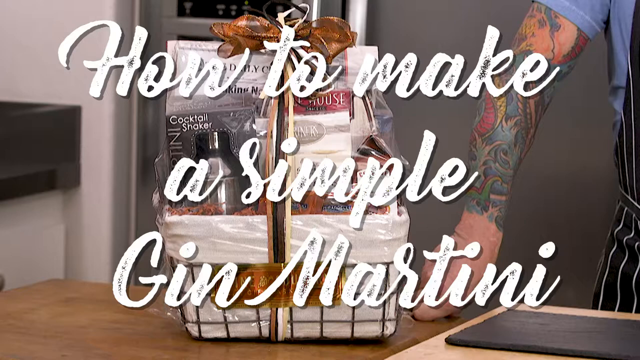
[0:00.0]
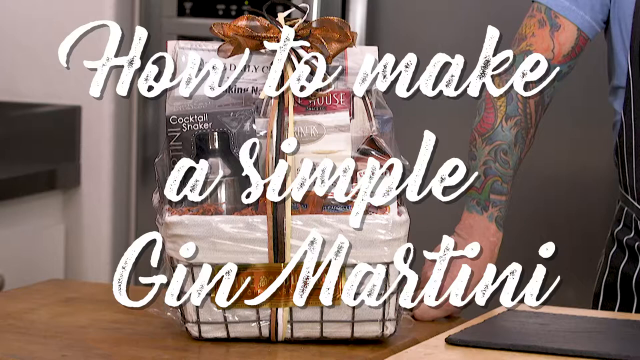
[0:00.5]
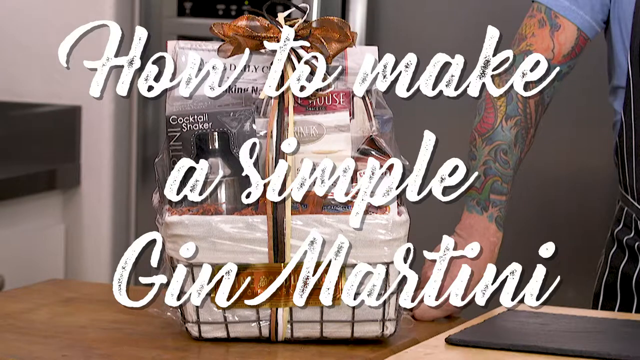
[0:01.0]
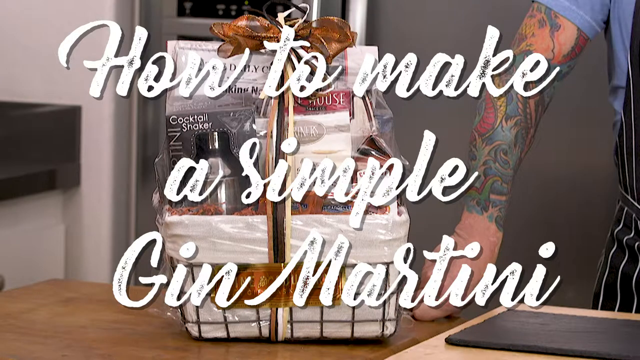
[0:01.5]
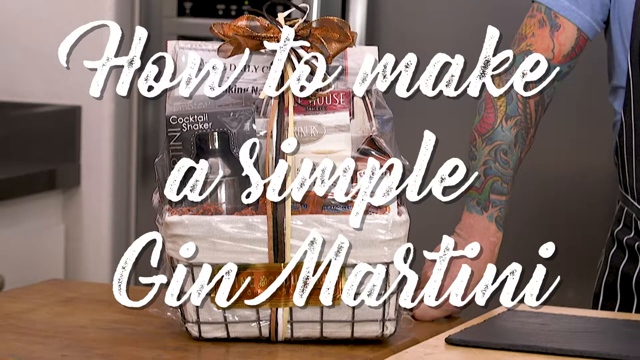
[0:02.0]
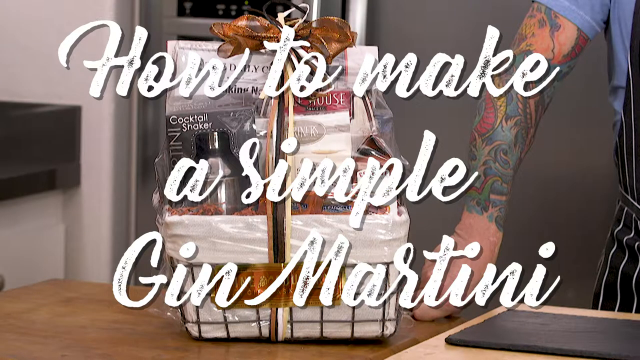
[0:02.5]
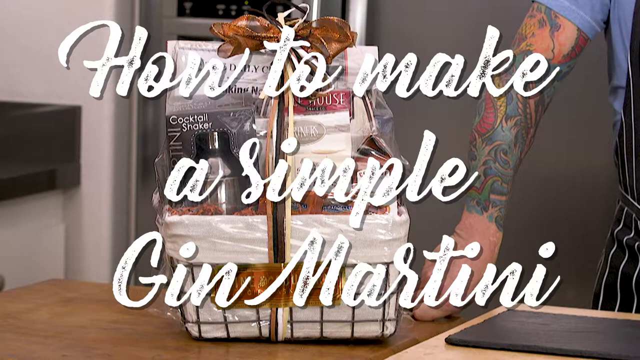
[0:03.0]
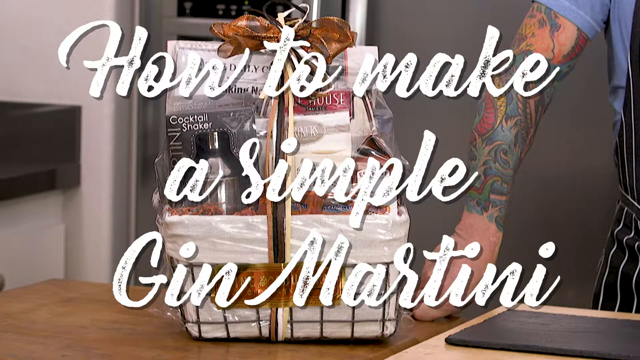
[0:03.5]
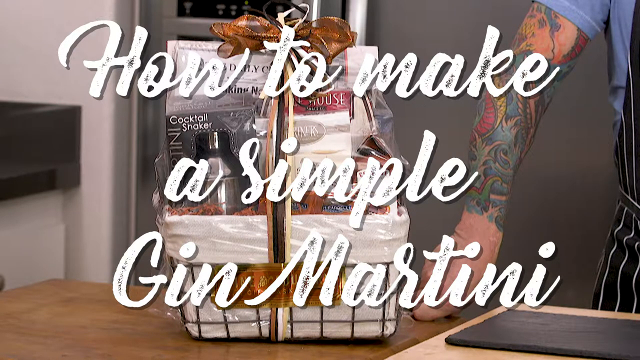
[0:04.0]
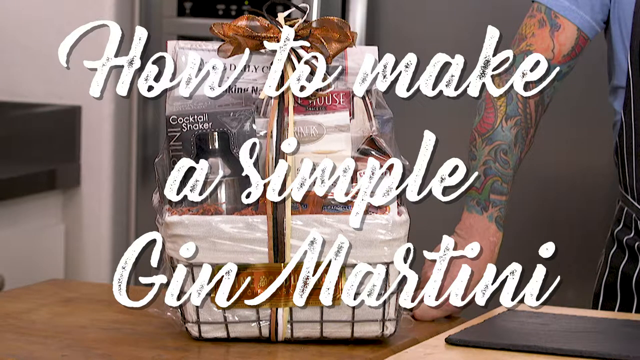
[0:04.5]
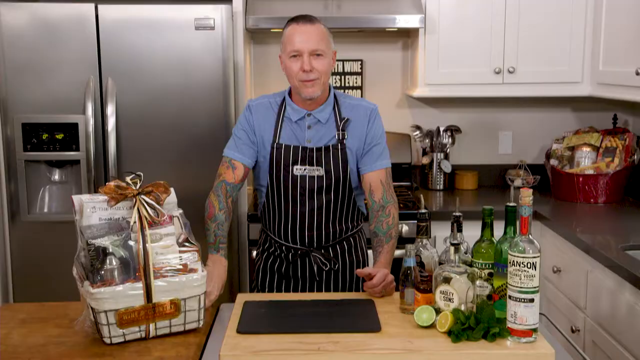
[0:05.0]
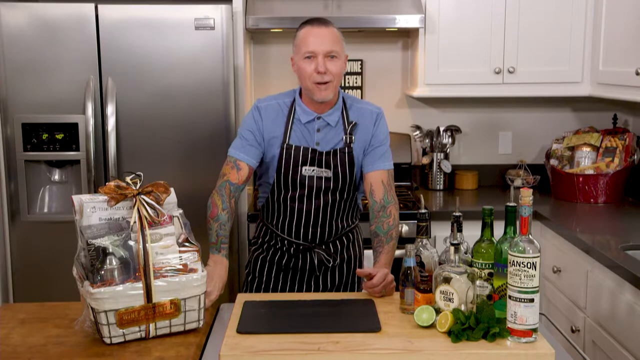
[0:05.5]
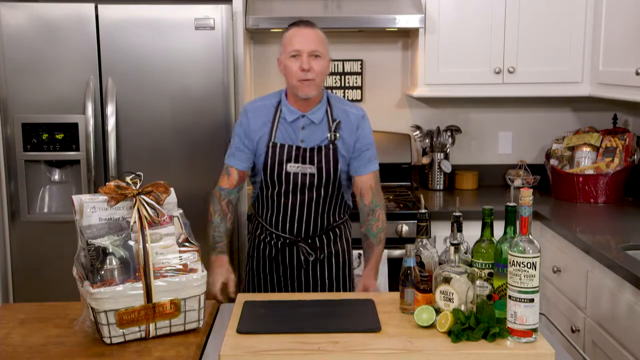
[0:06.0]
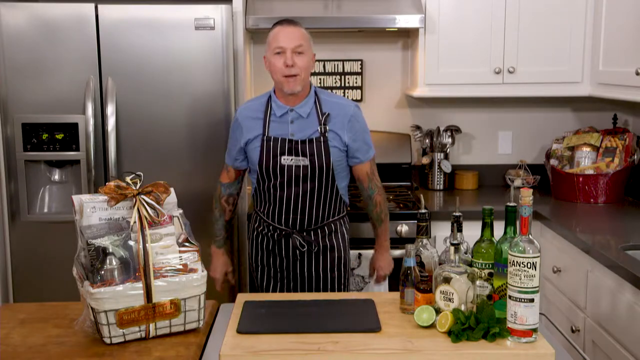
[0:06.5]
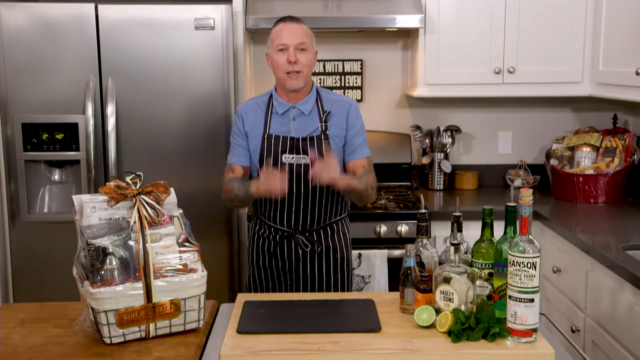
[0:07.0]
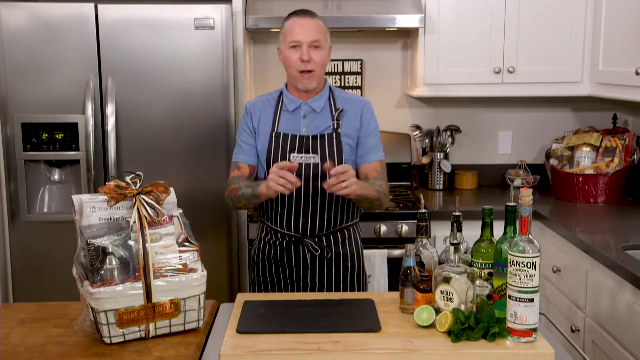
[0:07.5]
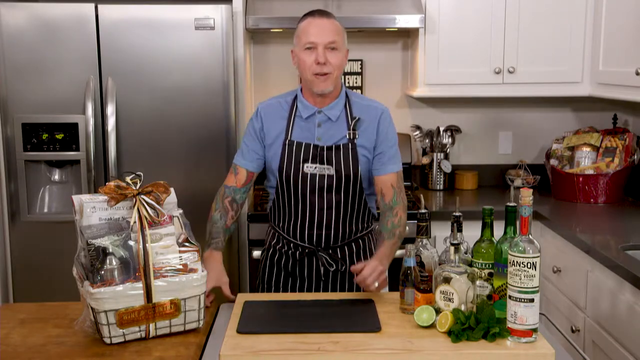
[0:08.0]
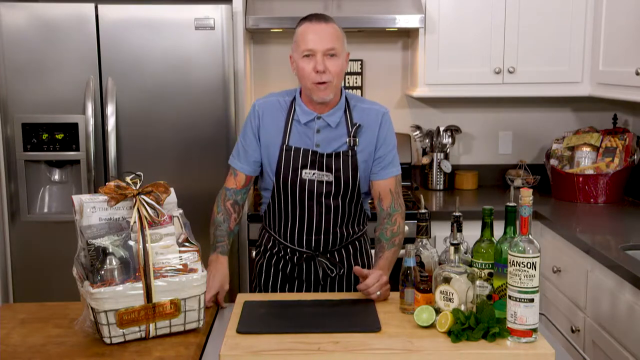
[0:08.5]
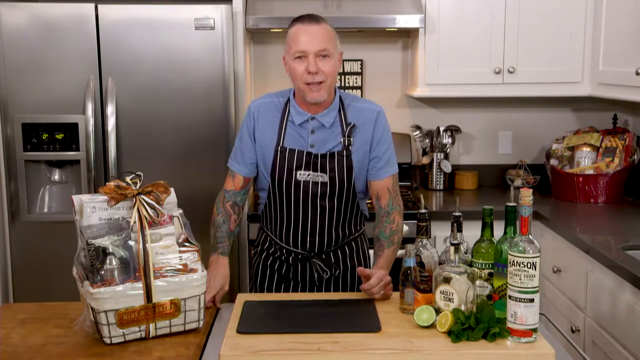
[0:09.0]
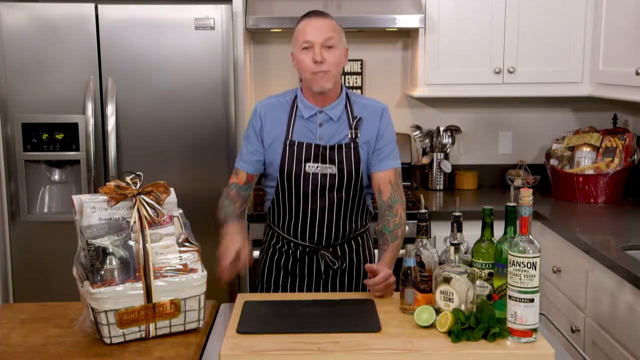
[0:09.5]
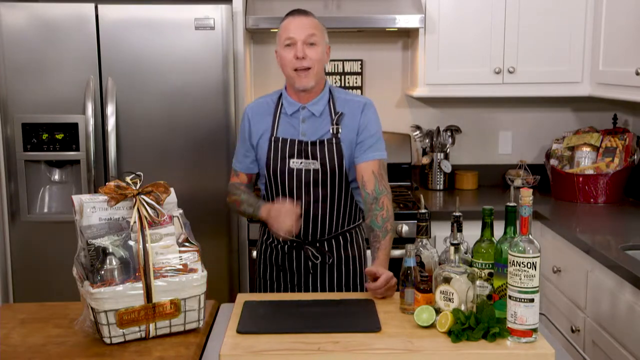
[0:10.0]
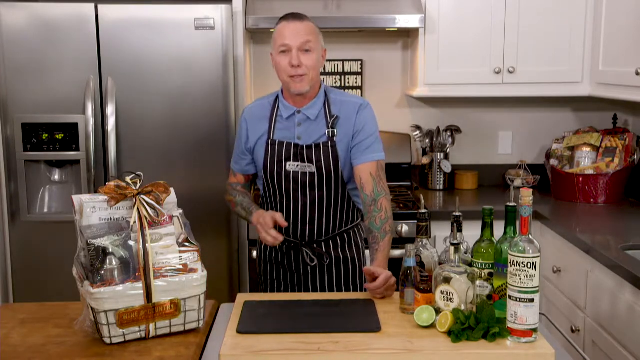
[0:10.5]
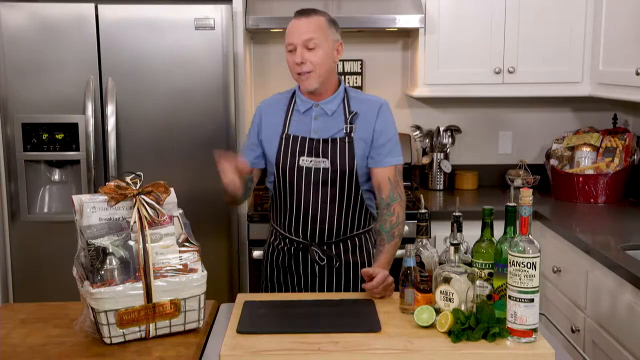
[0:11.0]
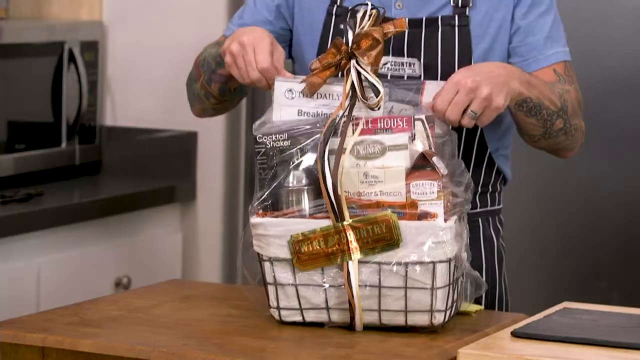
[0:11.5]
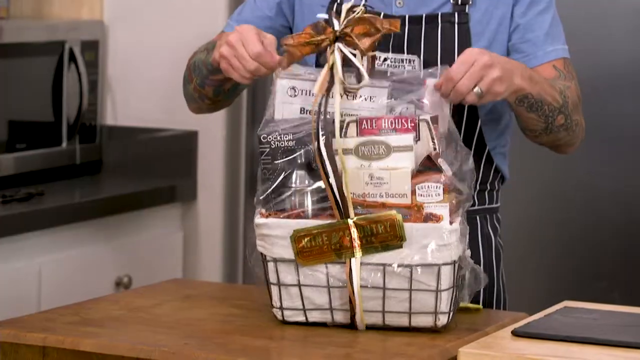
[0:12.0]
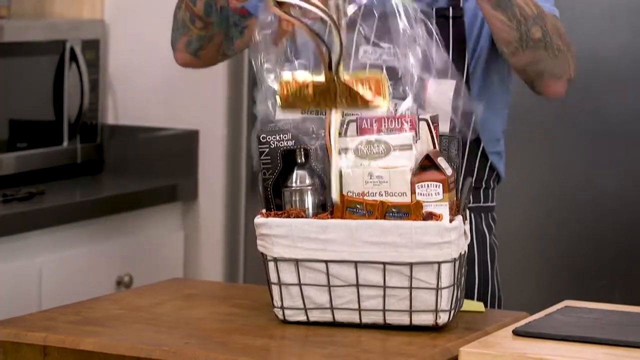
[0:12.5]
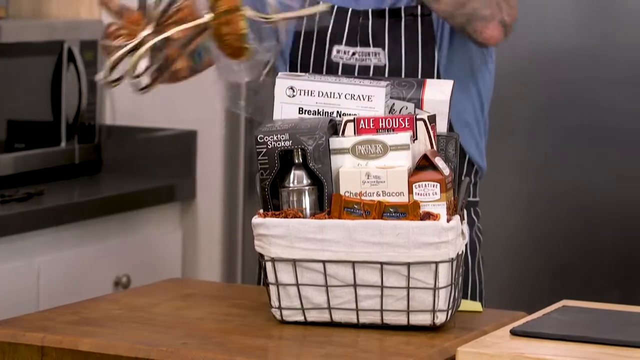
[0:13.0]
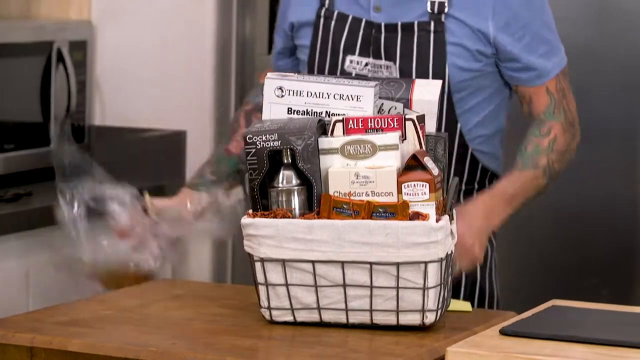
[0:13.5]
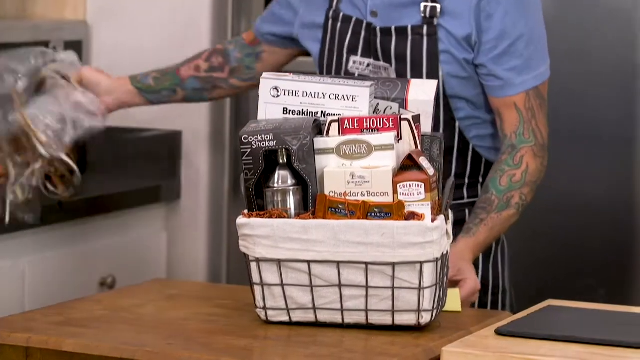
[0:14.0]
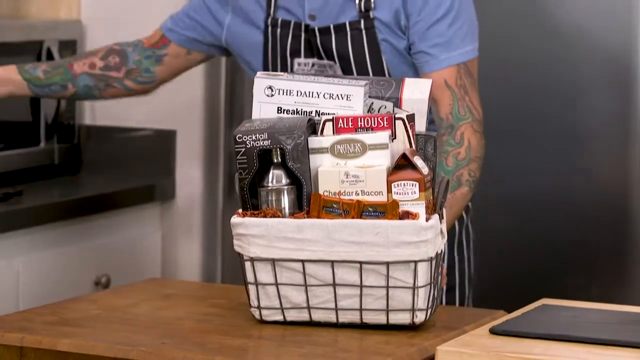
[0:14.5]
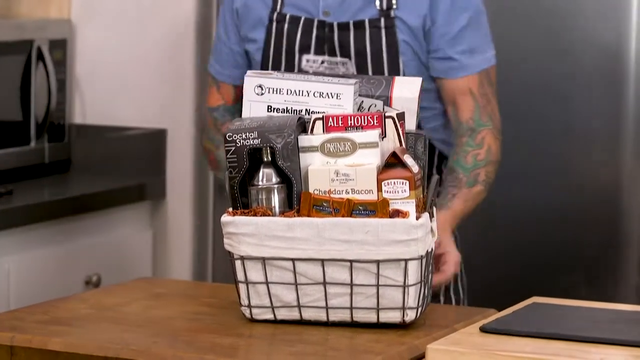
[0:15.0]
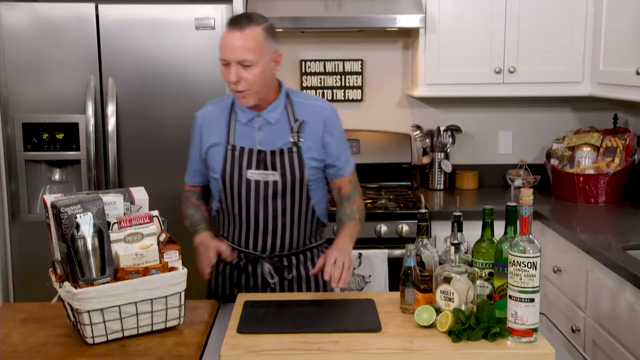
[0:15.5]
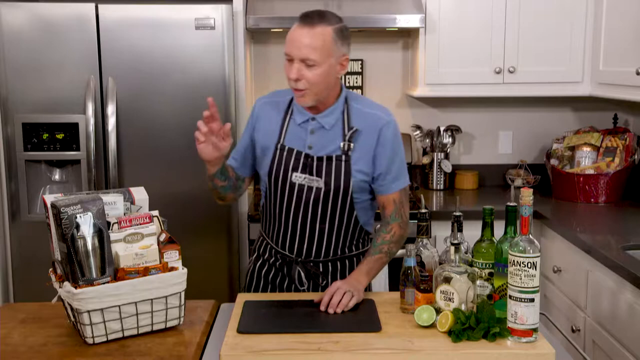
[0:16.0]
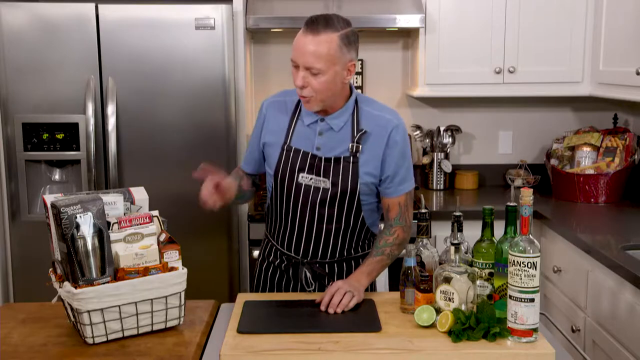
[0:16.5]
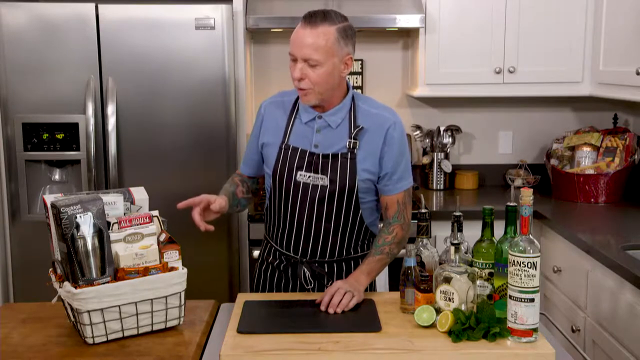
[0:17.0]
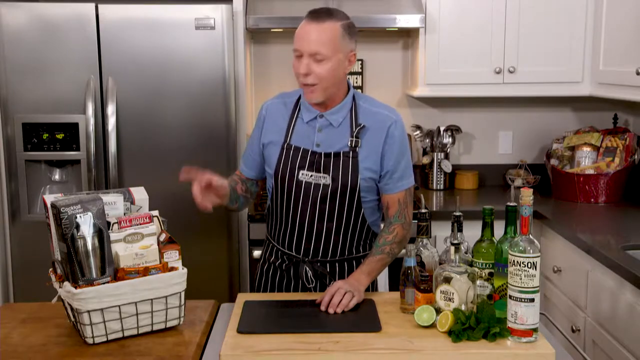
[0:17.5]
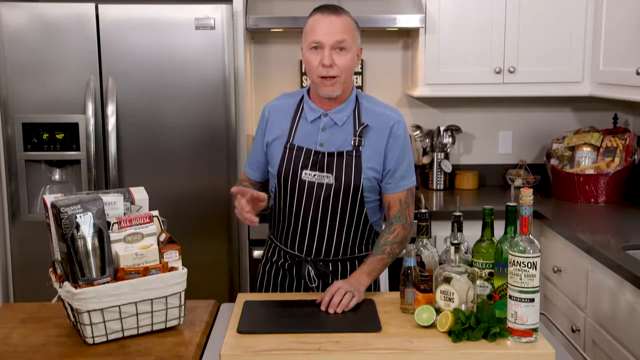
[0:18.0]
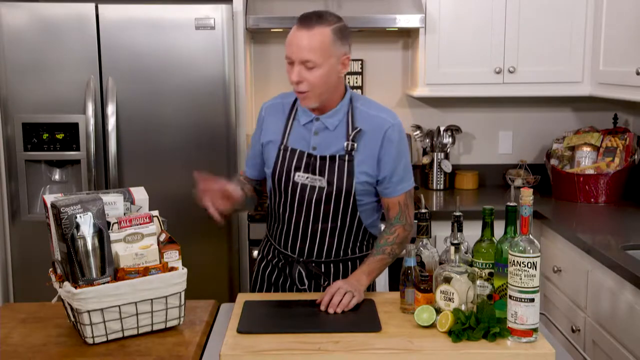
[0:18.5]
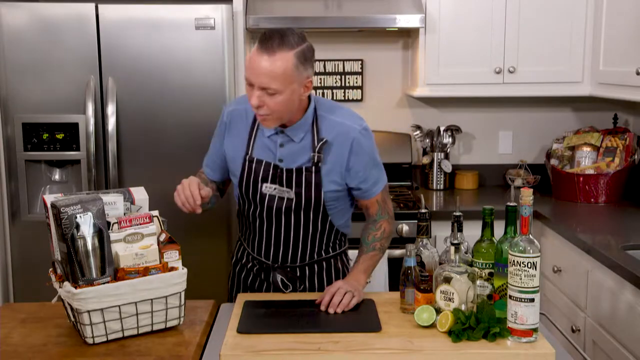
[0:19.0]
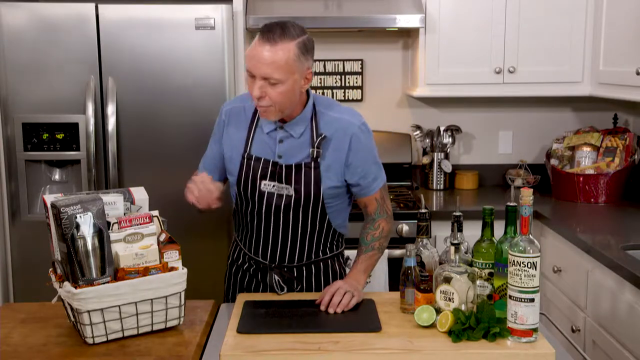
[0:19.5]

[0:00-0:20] The video opens with on-screen text reading "how to make a simple Gin Martini." Behind the words is the tattooed arm of a white man with short hair, wearing a blue shirt and a black and white apron. Both of his arms are tattooed in green and red. He has a hamper of what looks like the things needed to make the martini, and different brands of alcohol are in front of him. Behind him is a grey fridge with a dispenser and double doors. On the other side are grey to blackish kitchen countertops. There is something brown that looks like a chopping board, the kitchen counter has two shades of brown, and there is something black that looks like a laptop.